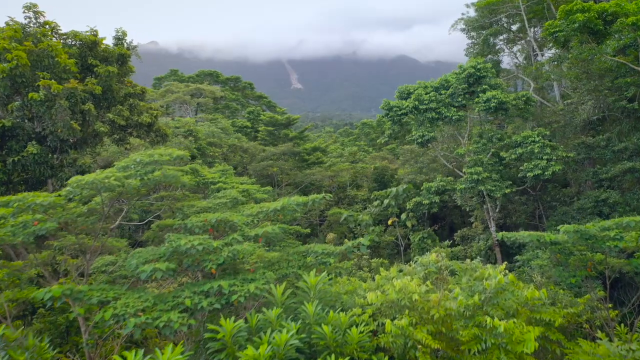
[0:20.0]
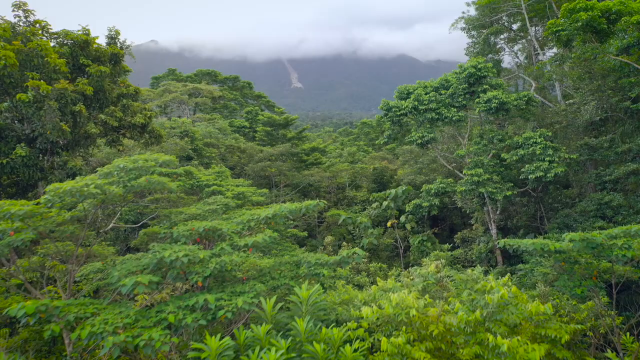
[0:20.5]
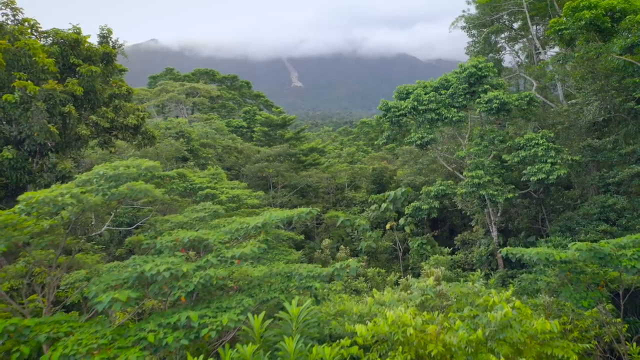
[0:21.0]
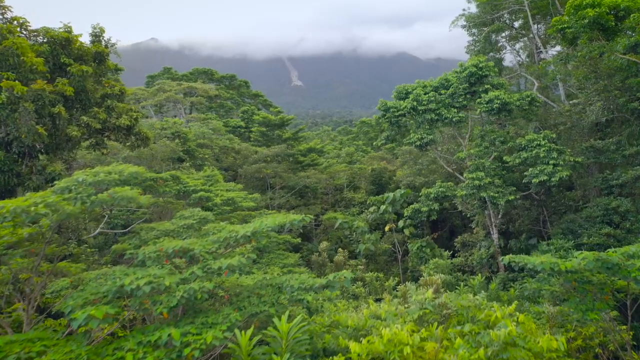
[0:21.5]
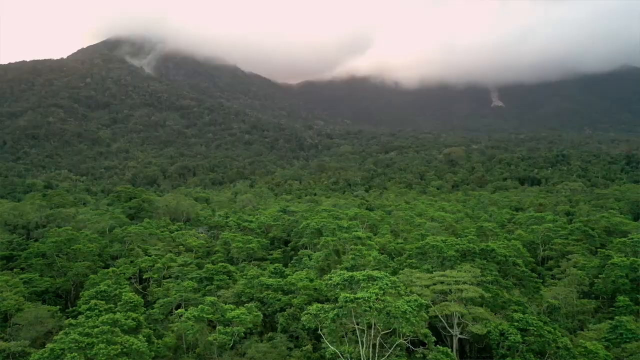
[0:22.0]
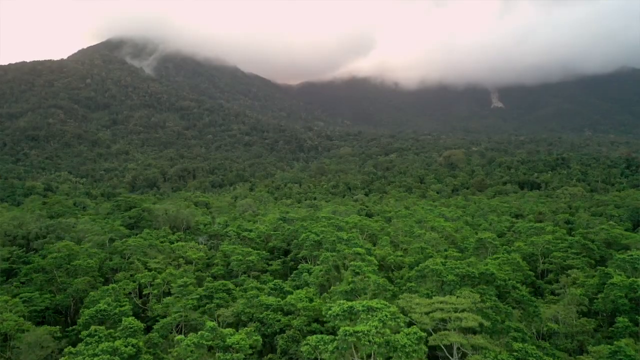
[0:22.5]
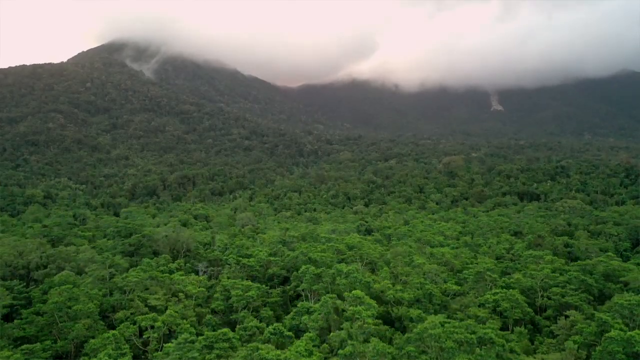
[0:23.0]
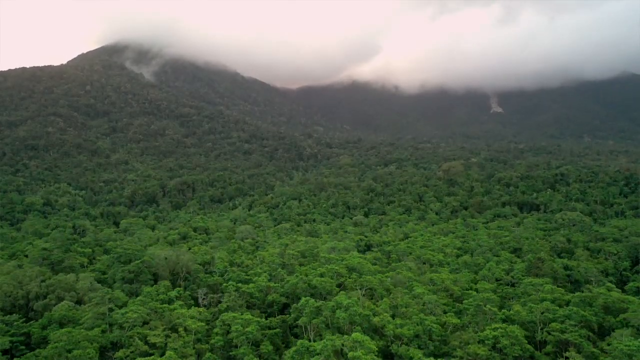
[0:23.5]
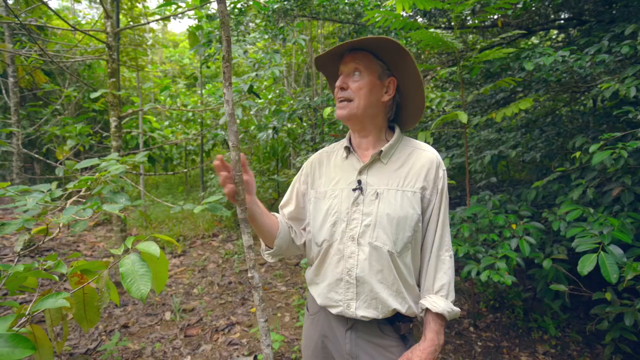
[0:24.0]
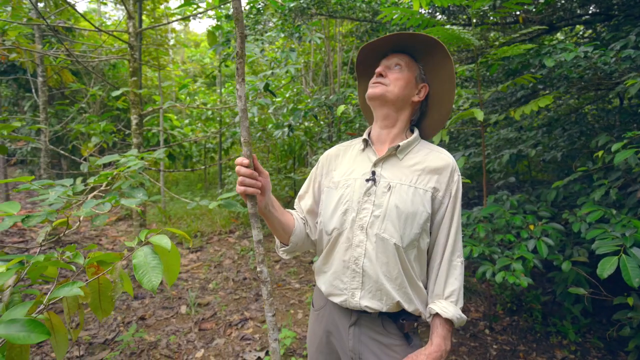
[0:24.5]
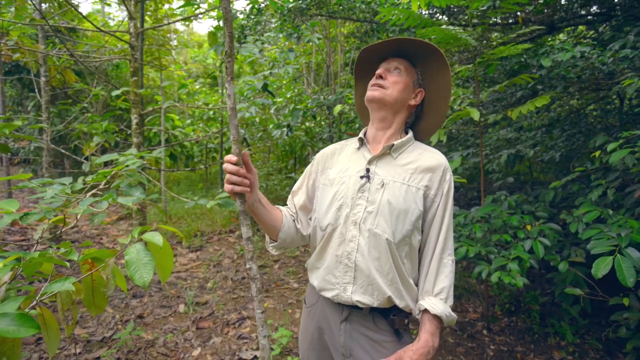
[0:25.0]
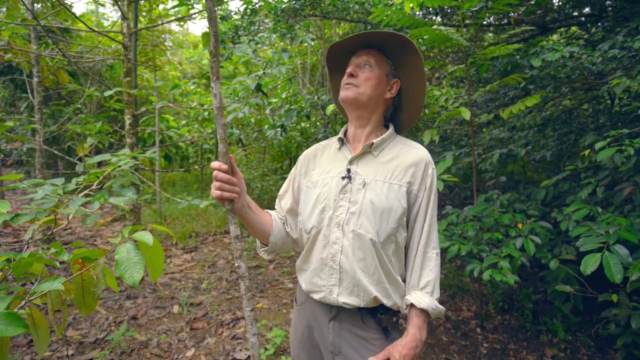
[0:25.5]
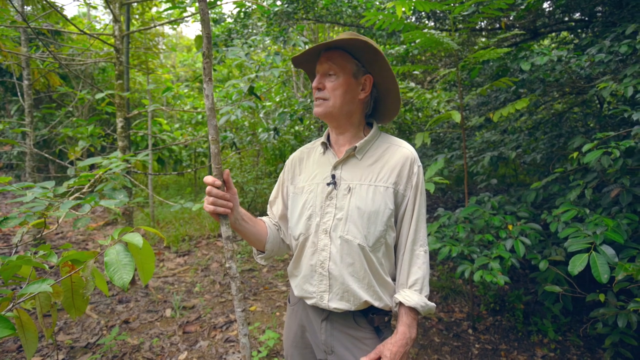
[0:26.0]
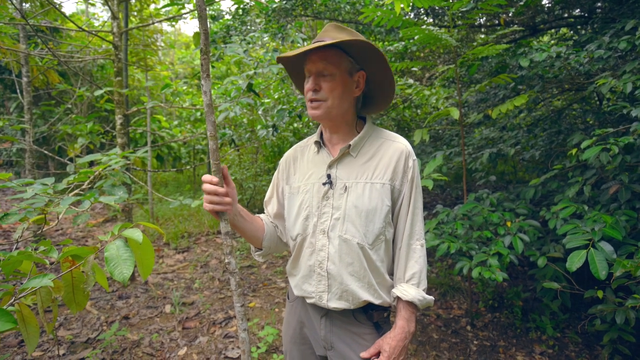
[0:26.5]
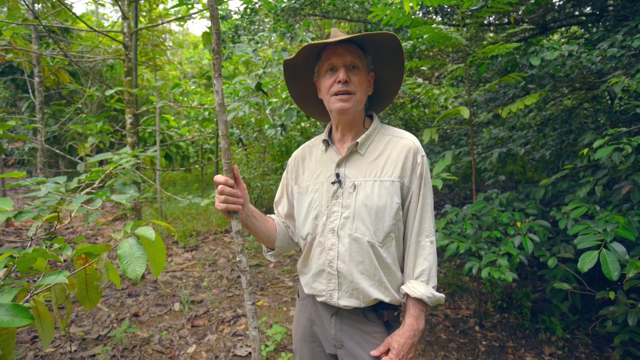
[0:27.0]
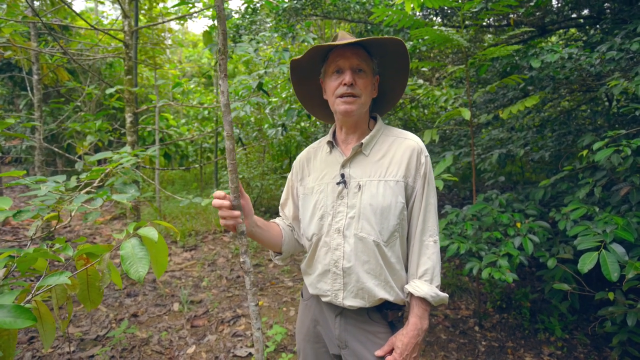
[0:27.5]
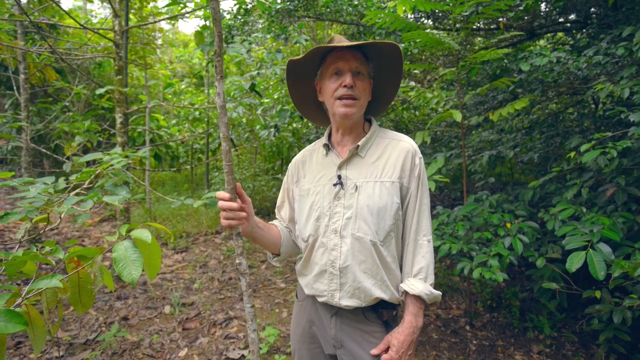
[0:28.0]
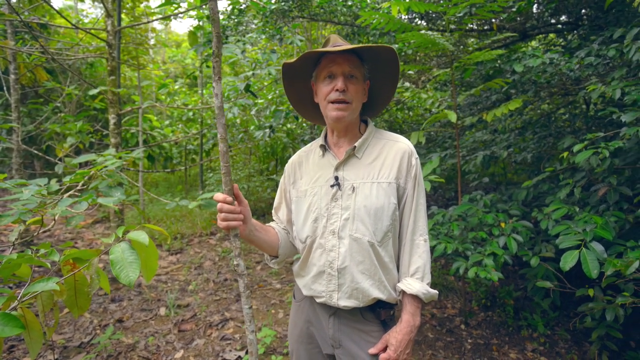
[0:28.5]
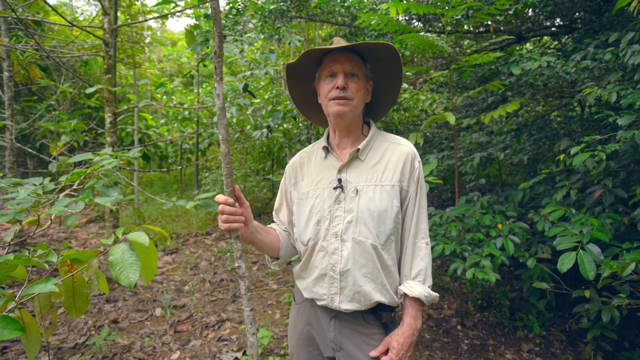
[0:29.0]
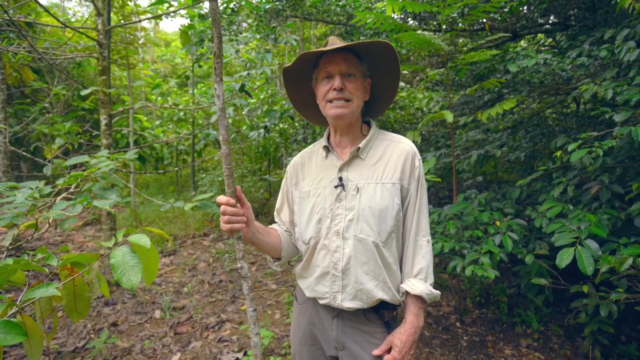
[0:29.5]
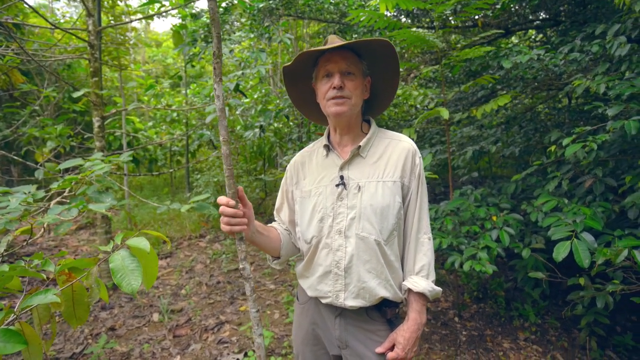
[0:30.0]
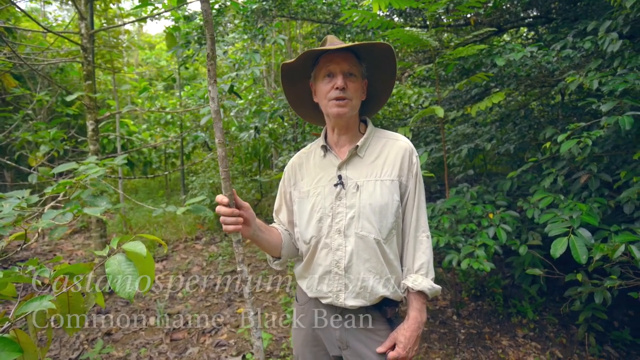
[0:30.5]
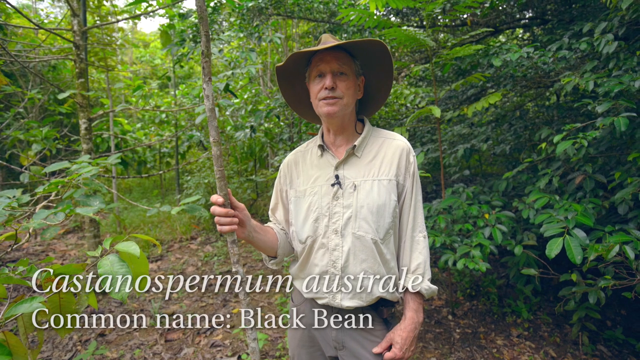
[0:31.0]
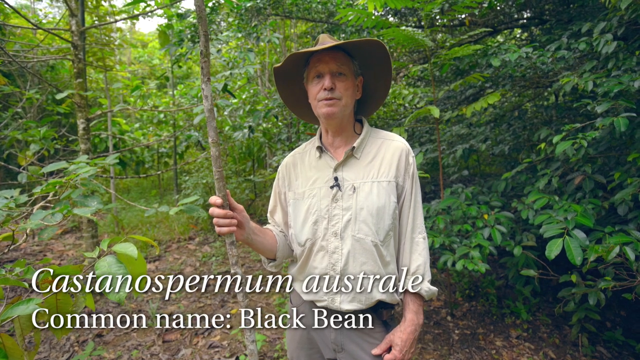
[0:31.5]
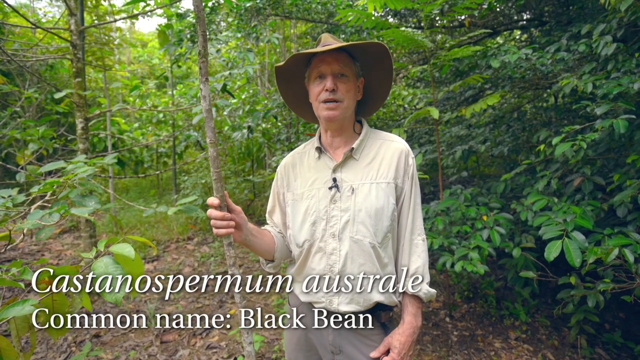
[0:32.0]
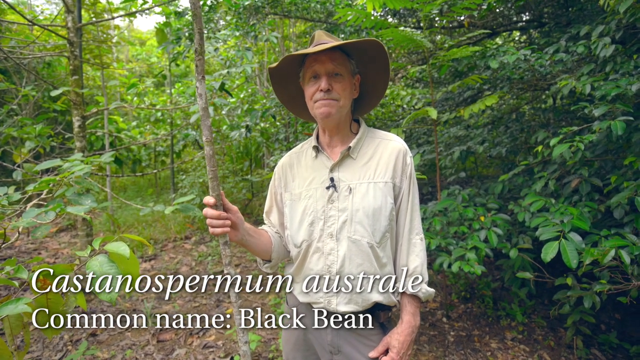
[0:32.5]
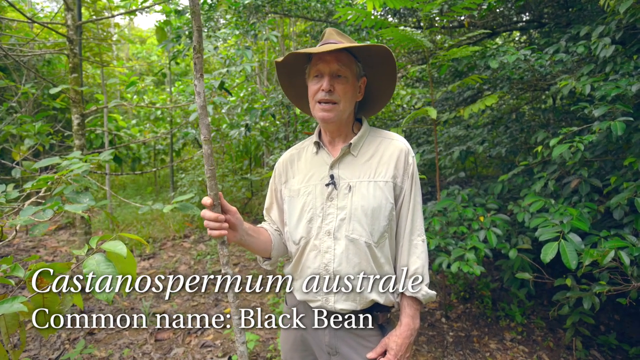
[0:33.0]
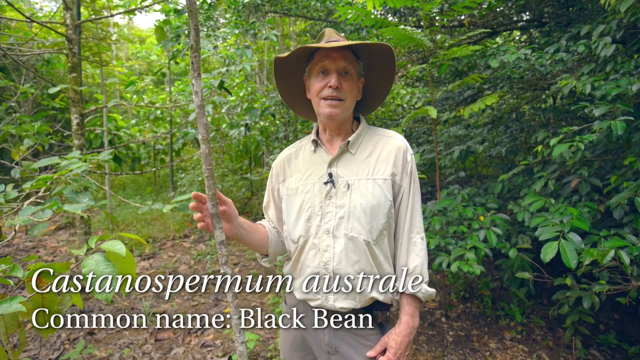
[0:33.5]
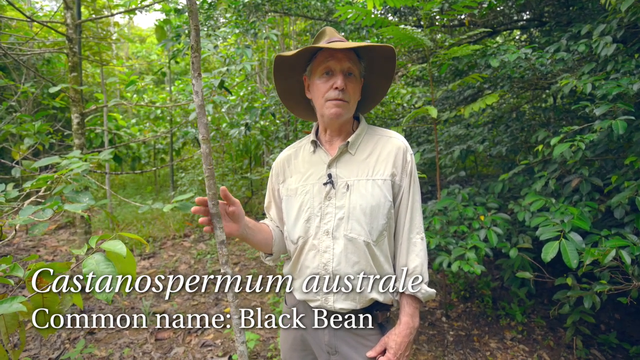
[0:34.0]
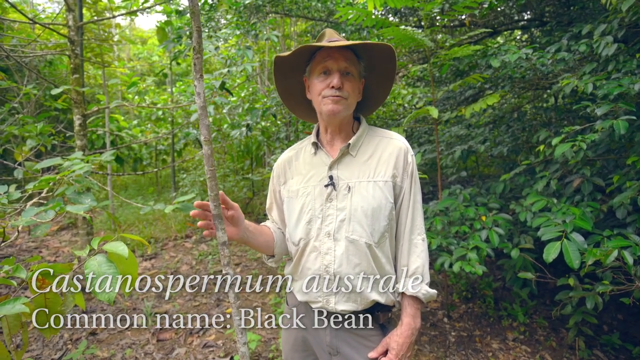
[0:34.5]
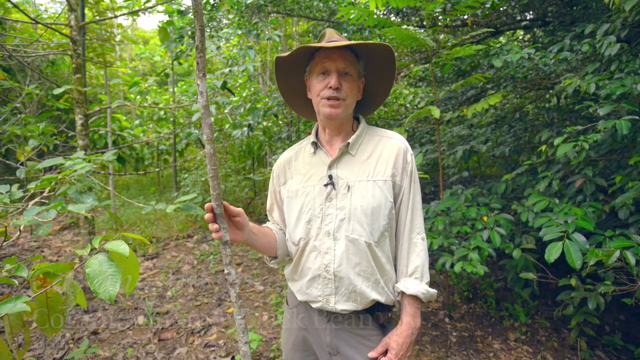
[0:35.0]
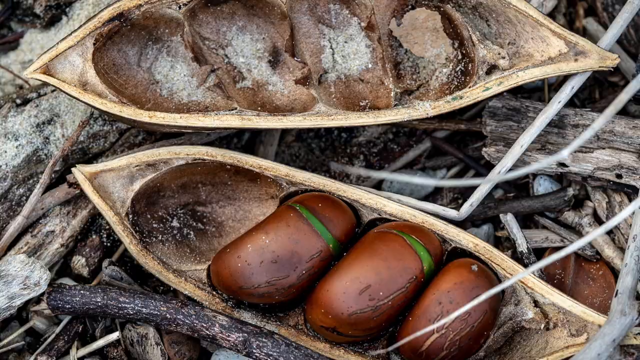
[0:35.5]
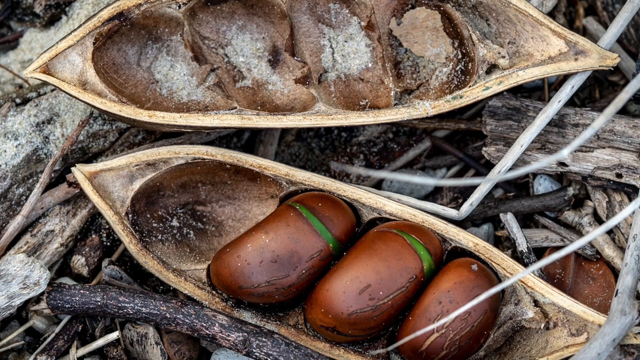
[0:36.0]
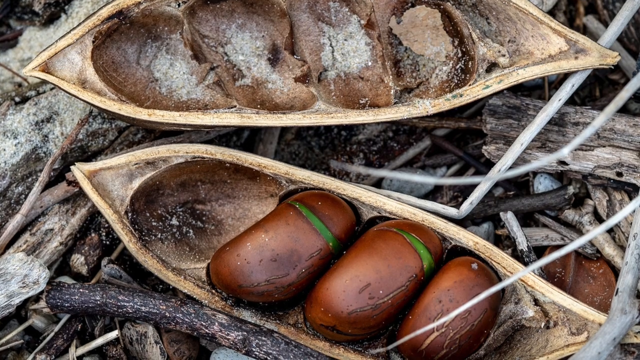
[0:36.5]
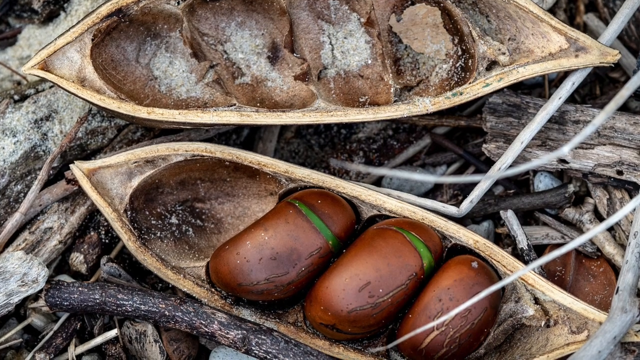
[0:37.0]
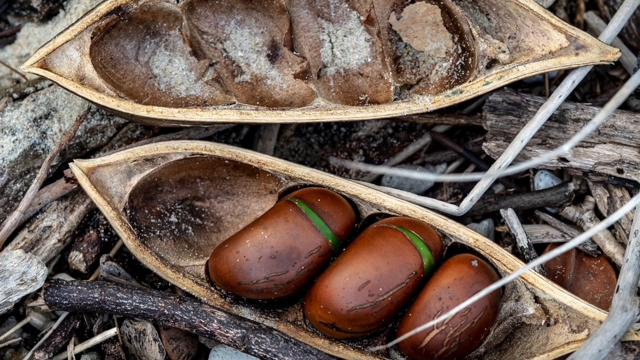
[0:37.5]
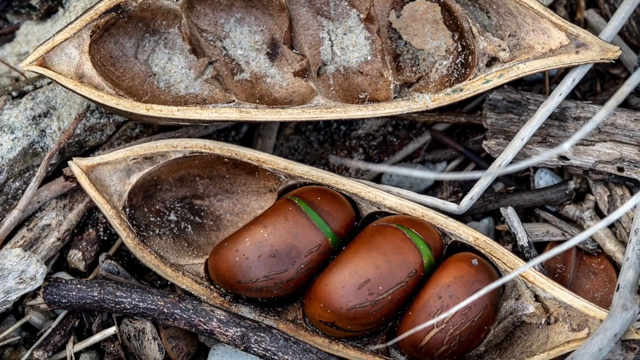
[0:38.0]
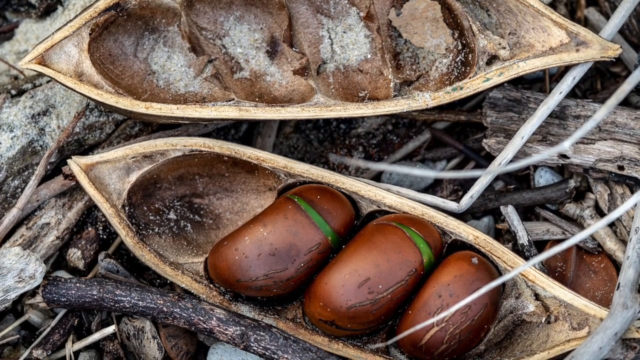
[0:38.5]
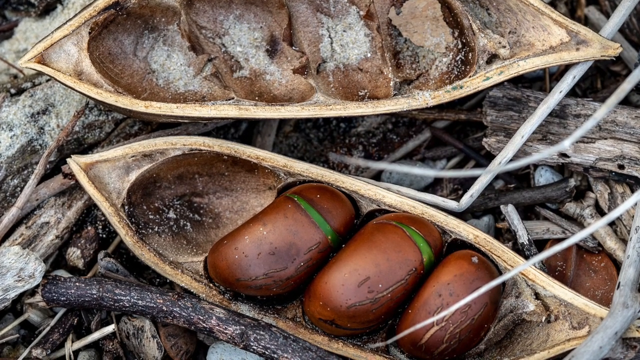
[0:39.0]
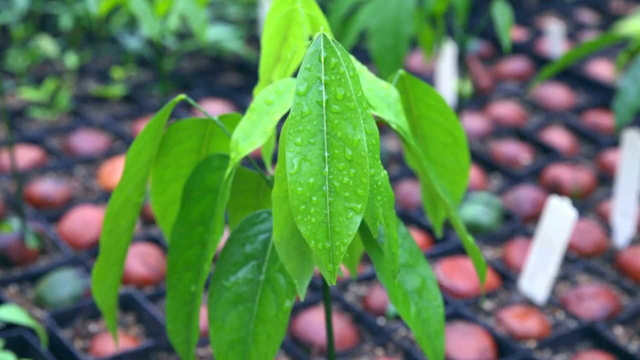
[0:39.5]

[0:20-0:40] An aerial view of a jungle, apparently shot from a drone, moves slowly forward and then goes straight up. The video cuts to a man standing in the forest, holding with his right arm a small tree branch coming out of the ground. He wears a light tan button-up shirt with the sleeves rolled up, a tan cowboy hat and brown pants, and he speaks to the camera. Along the bottom of the screen, white text reads "Castanospermum austerel common name black bean." Next, a tan bean split in half lies on sticks and dirt, with both halves visible and three individual dark brown beans inside; the small beans inside the shell have small green stripes on them.